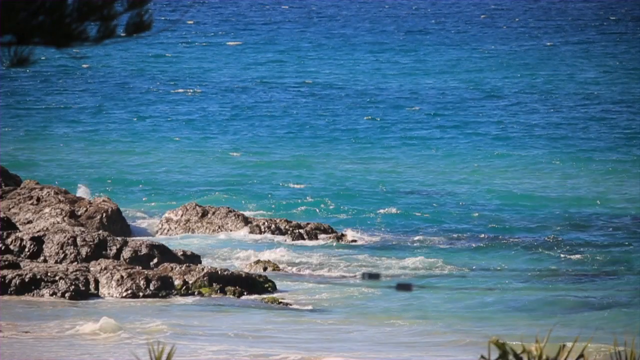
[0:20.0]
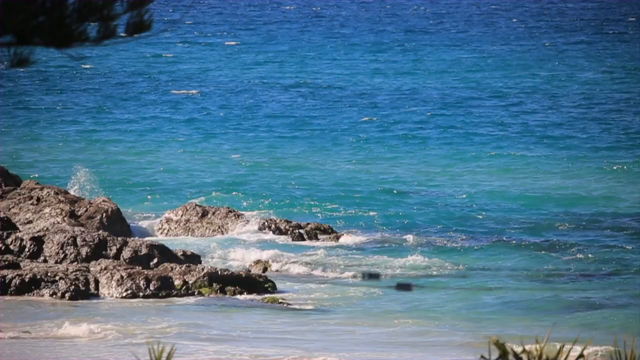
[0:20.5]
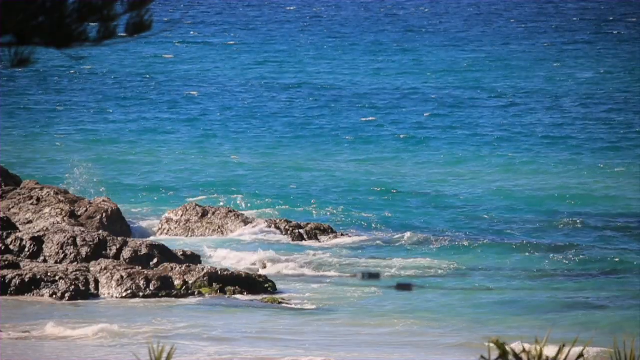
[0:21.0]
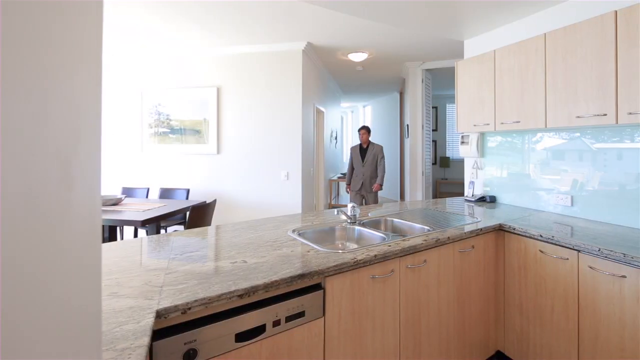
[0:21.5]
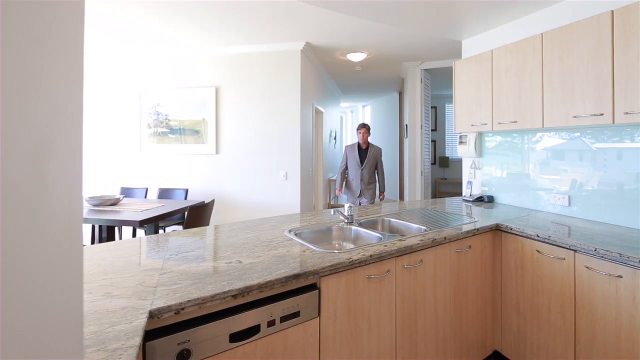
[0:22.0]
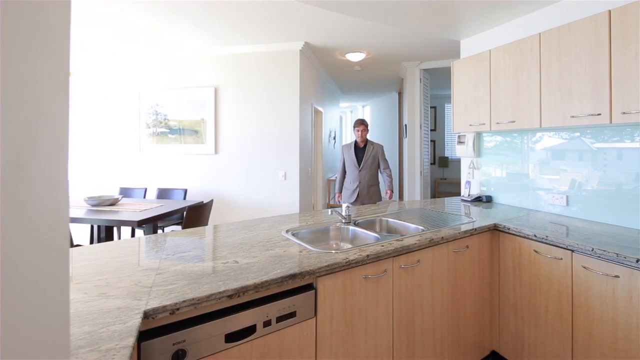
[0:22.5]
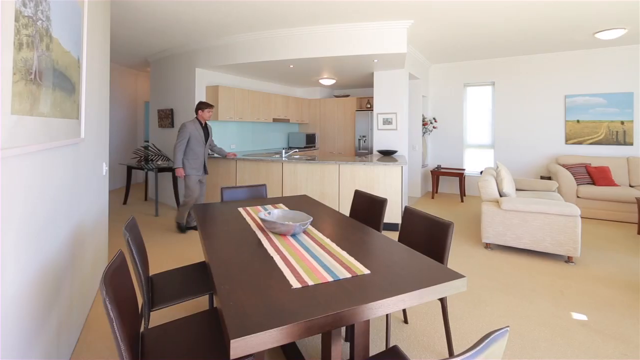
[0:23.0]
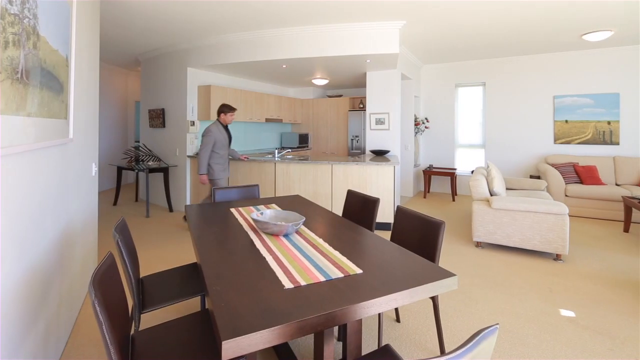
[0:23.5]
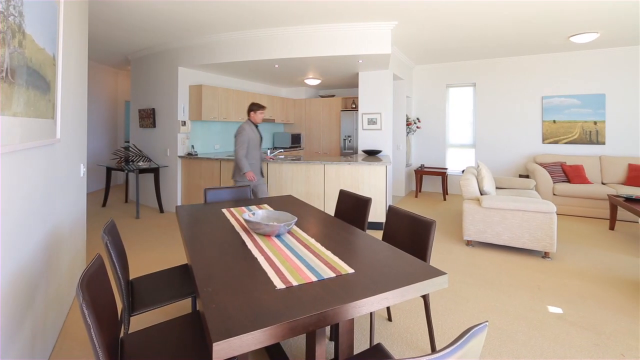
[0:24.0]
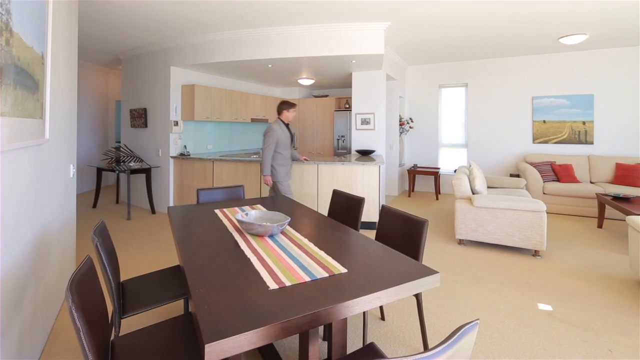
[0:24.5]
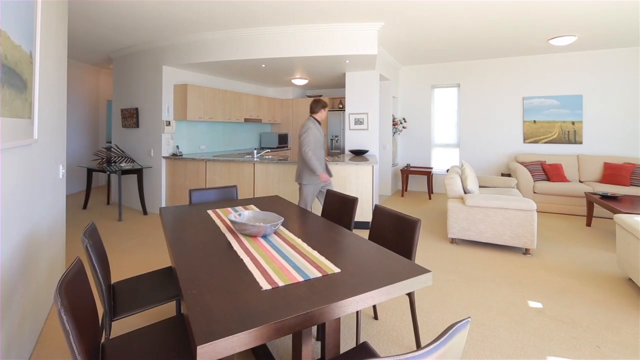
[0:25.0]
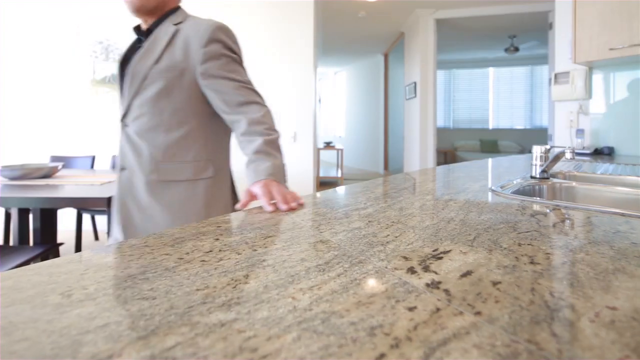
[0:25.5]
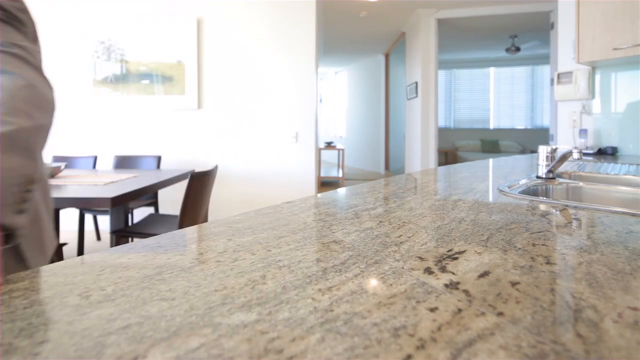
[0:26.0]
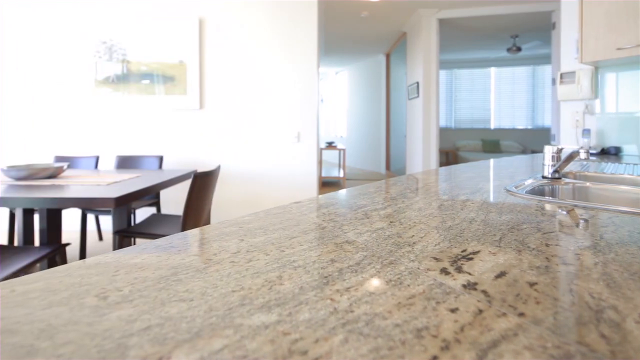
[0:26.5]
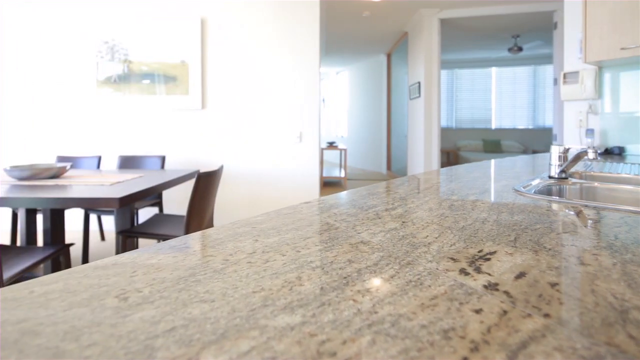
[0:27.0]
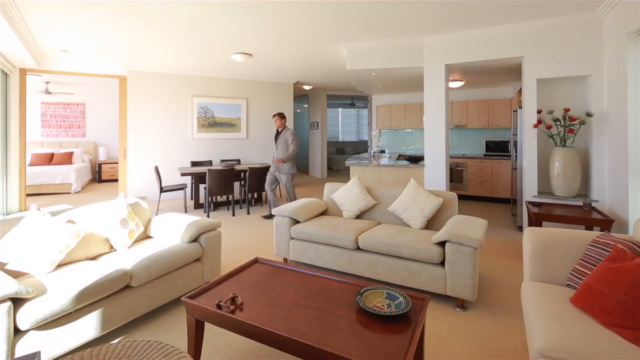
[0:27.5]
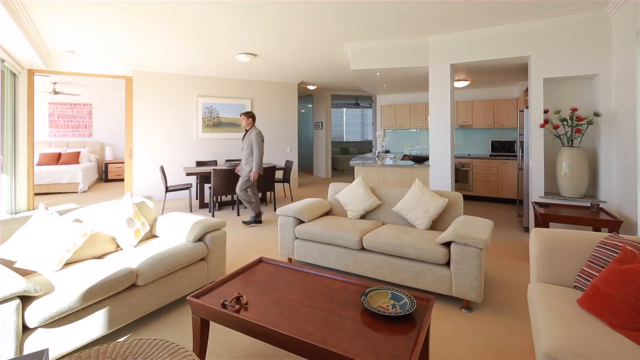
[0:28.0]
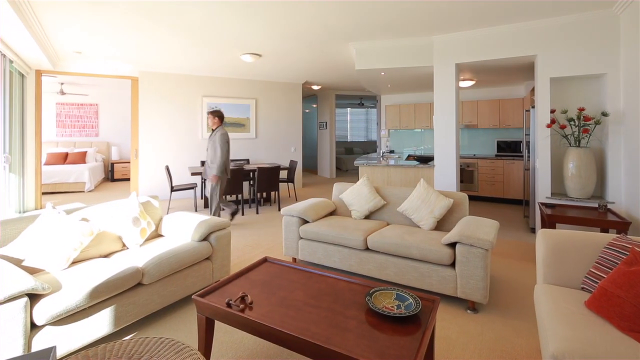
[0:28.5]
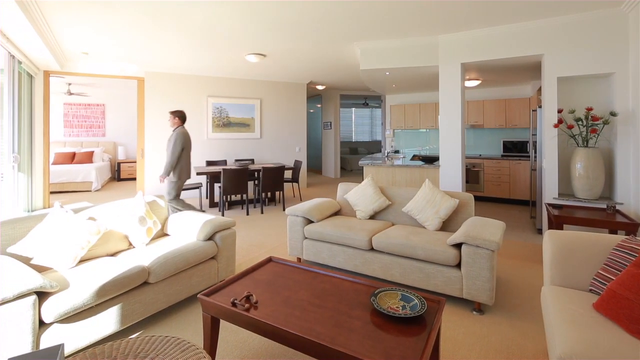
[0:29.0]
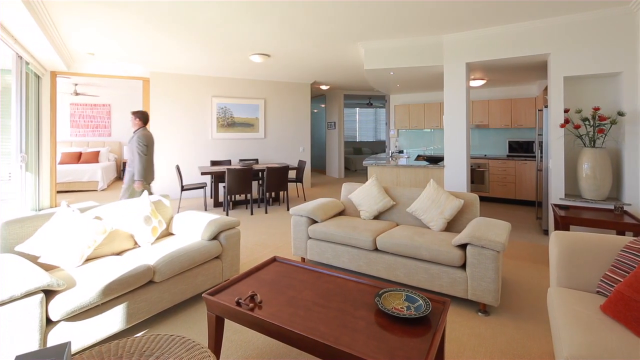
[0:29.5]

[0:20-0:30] Slight waves continue, with some rocks on the left side, and then the scene changes to the inside of a kitchen. A gentleman in a gray suit and a black undershirt walks, seen from inside the kitchen, and to the left is a dining table with four chairs. The view switches to one from the dining table, showing the kitchen on the left-hand side or center and, on the right-hand side, the couches and coffee table of the living room. The view returns to the kitchen, where the gentleman touches the kitchen counter. He then walks between the living room and the dining table, apparently heading to the balcony, passing through most of the apartment. As he walks, the bedroom is visible in the background on the left through an open doorway, with a bed that looks like it could be a full or queen bed.